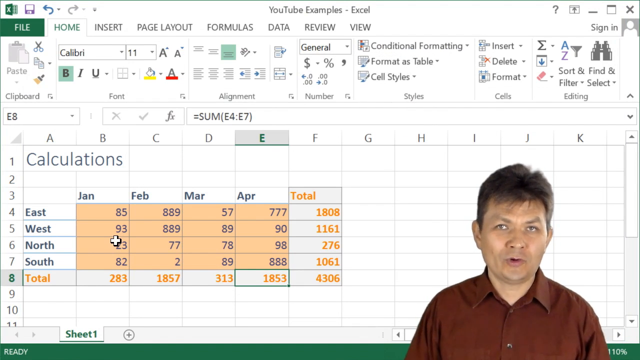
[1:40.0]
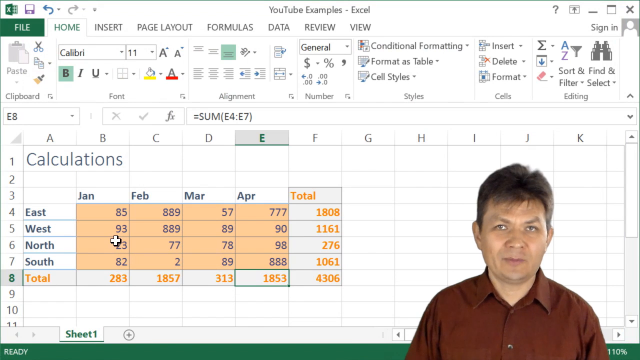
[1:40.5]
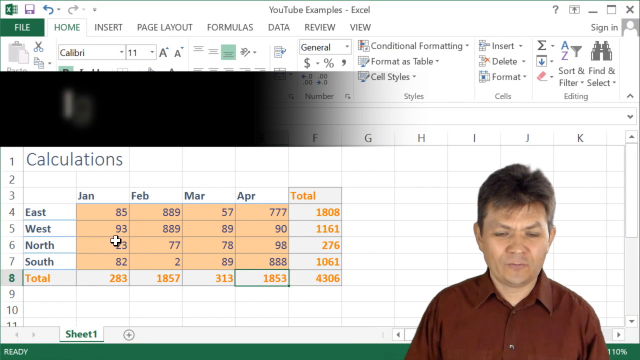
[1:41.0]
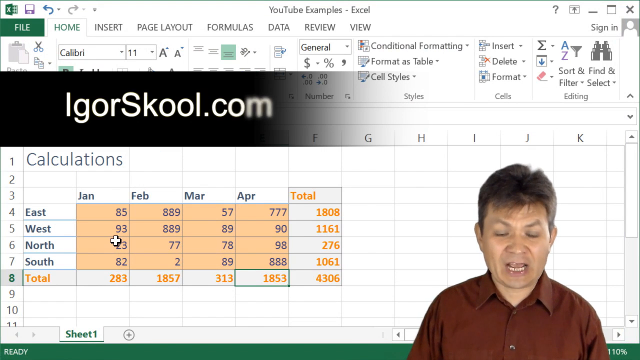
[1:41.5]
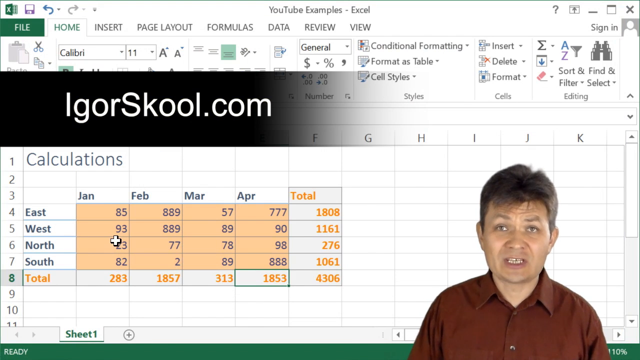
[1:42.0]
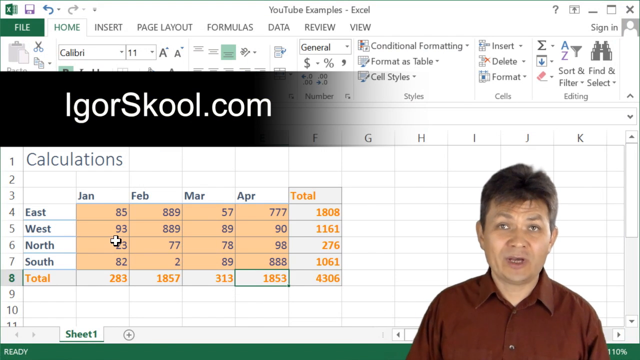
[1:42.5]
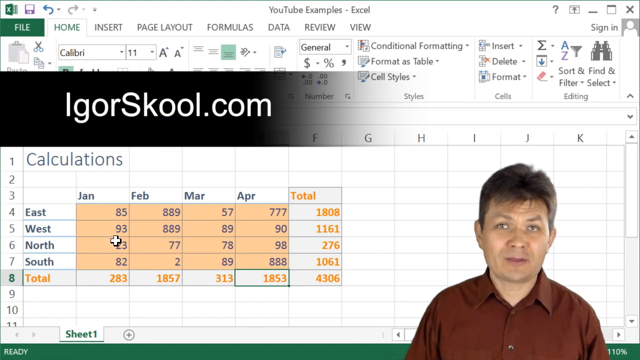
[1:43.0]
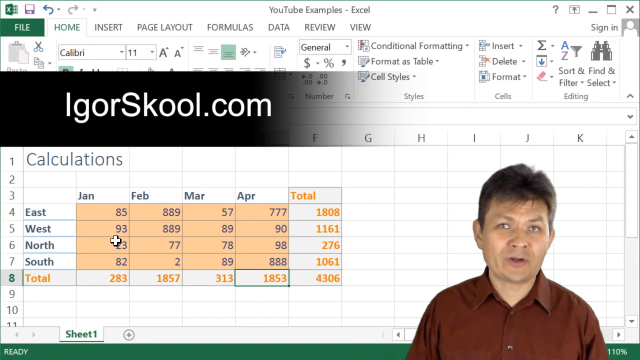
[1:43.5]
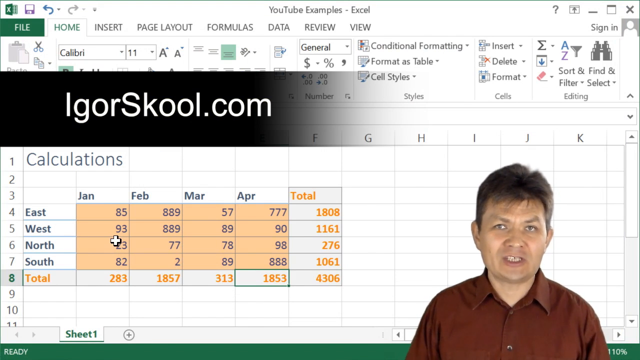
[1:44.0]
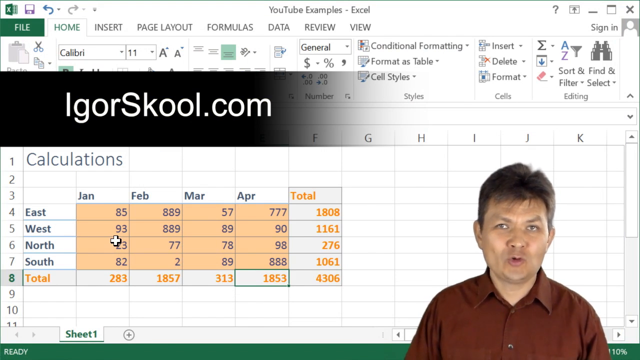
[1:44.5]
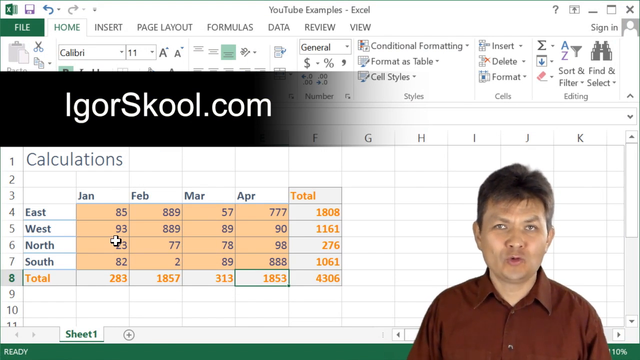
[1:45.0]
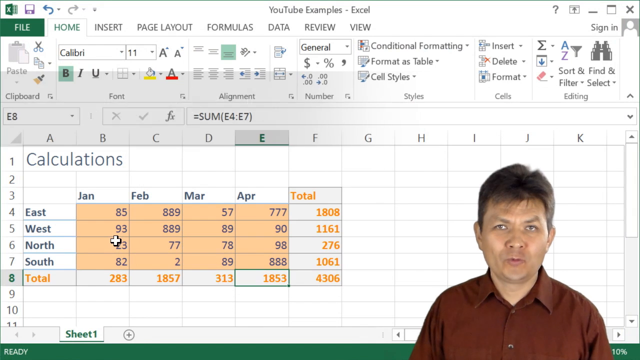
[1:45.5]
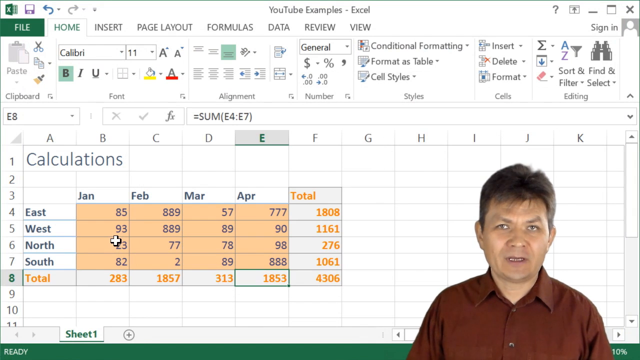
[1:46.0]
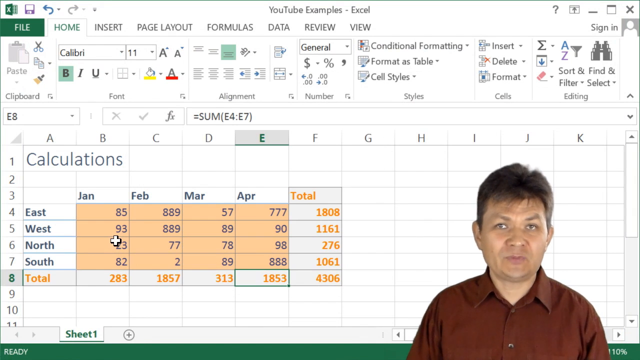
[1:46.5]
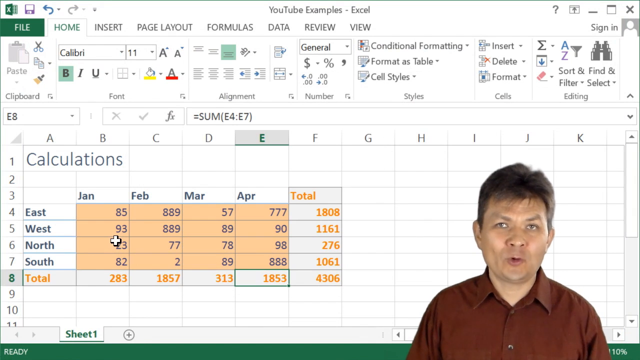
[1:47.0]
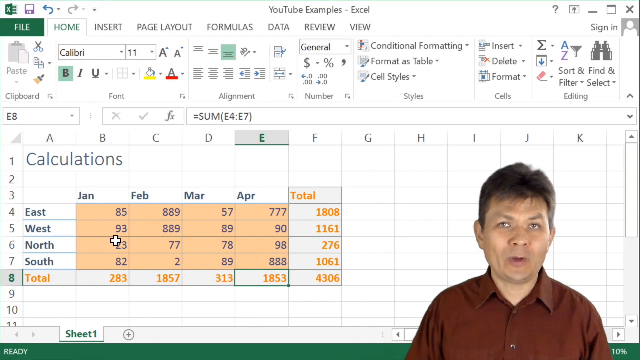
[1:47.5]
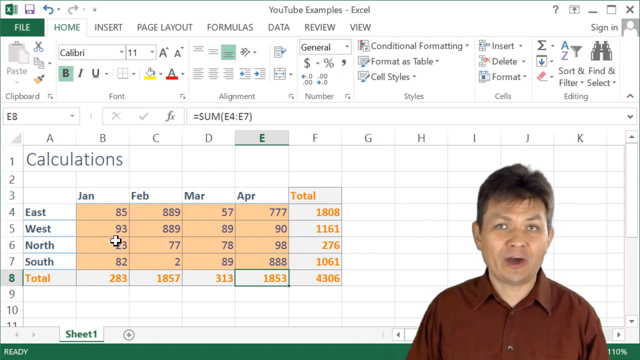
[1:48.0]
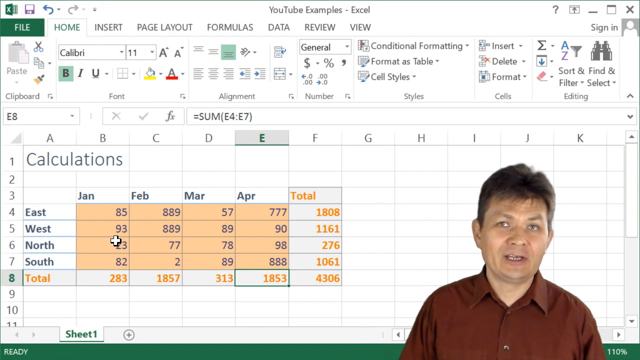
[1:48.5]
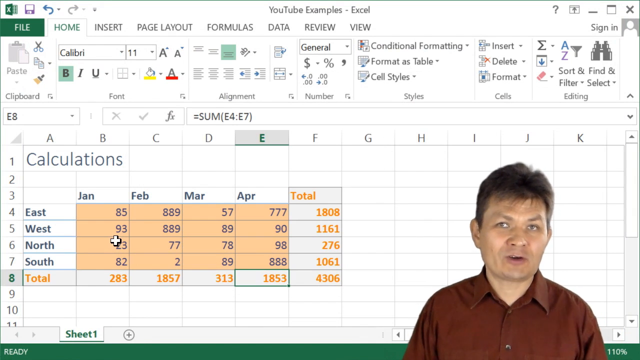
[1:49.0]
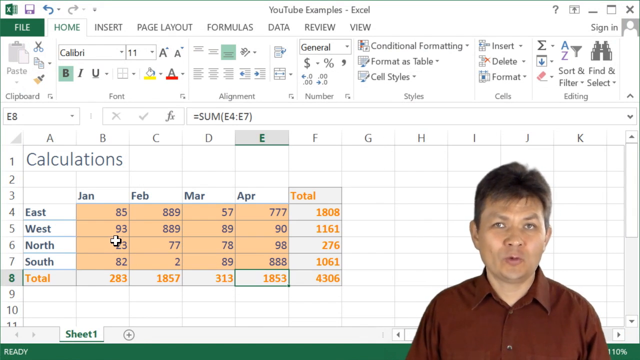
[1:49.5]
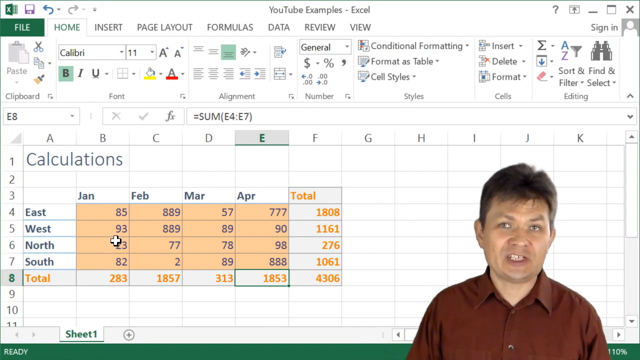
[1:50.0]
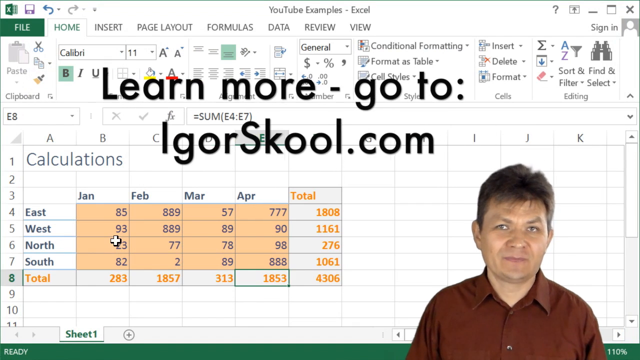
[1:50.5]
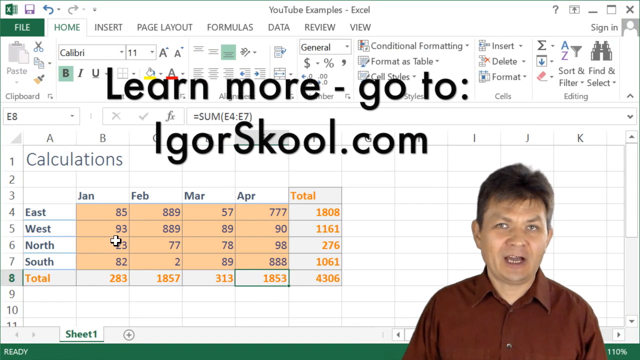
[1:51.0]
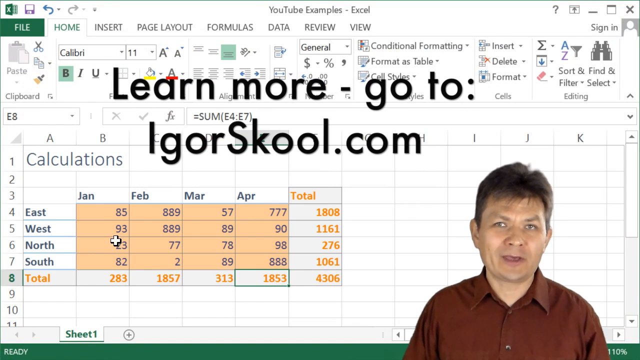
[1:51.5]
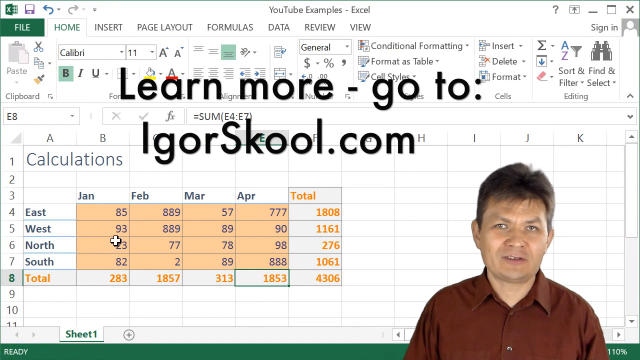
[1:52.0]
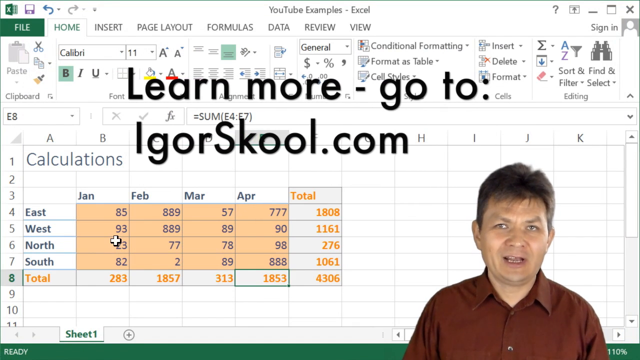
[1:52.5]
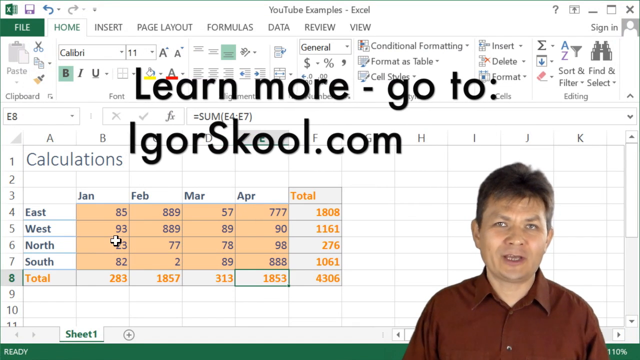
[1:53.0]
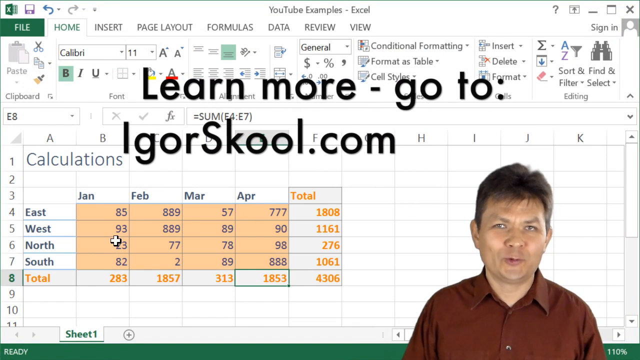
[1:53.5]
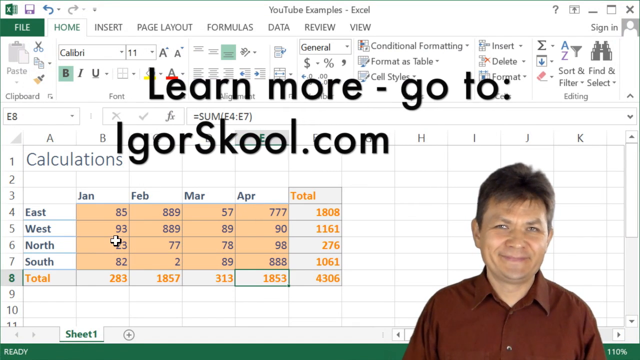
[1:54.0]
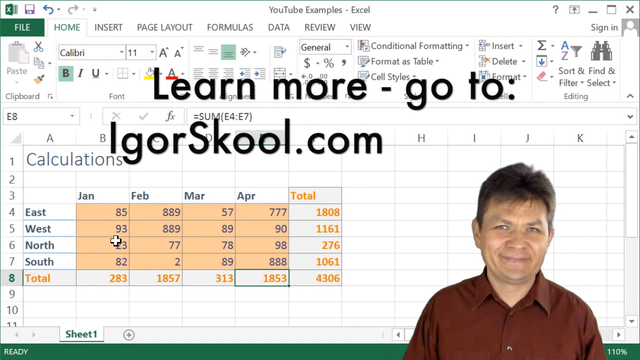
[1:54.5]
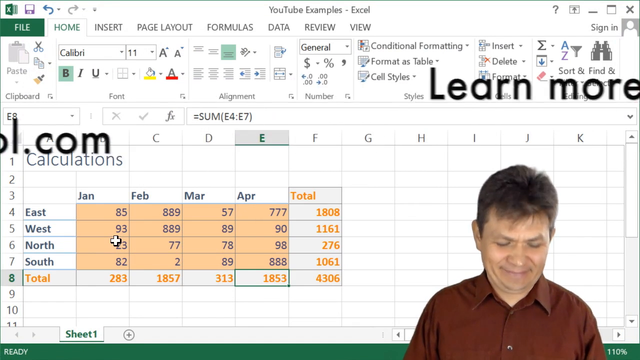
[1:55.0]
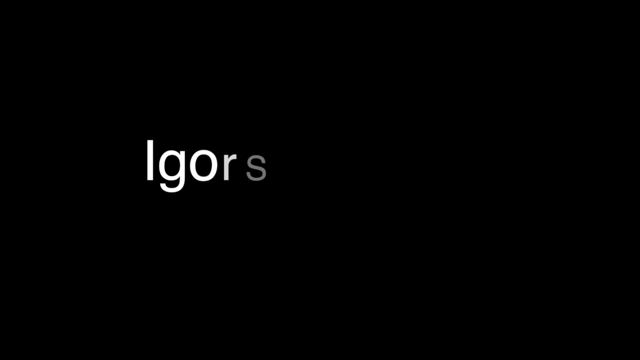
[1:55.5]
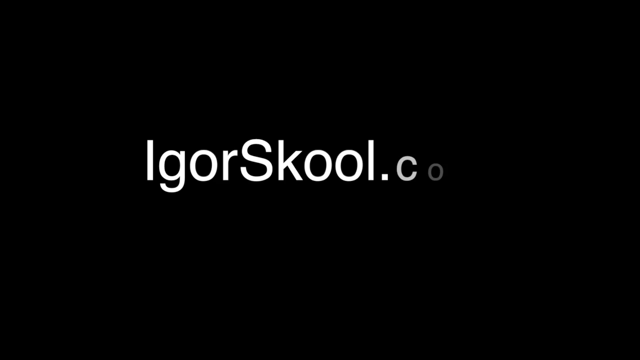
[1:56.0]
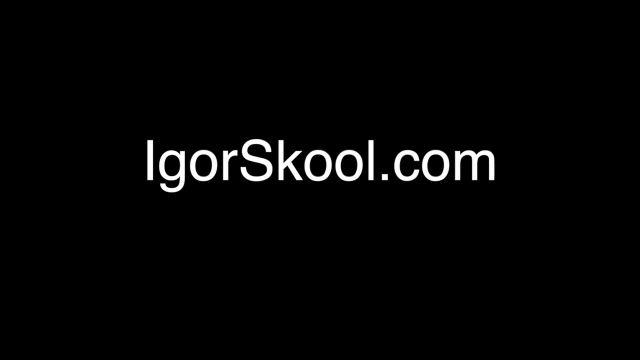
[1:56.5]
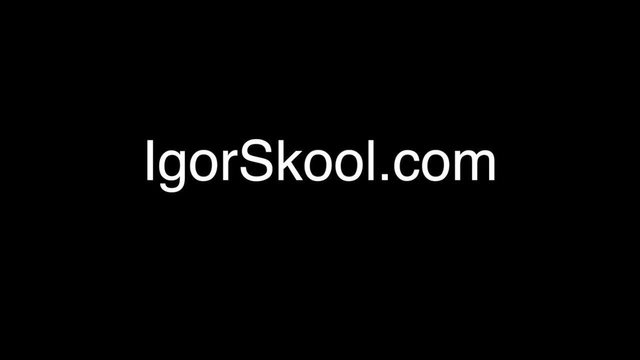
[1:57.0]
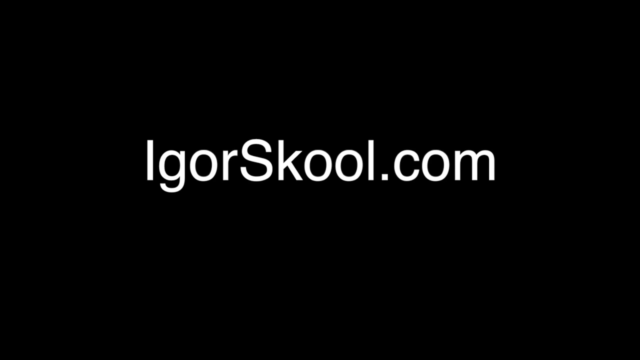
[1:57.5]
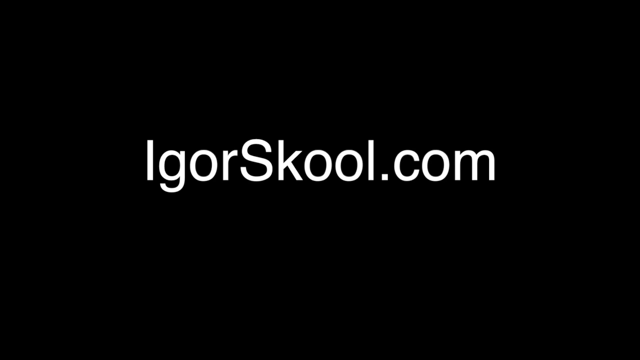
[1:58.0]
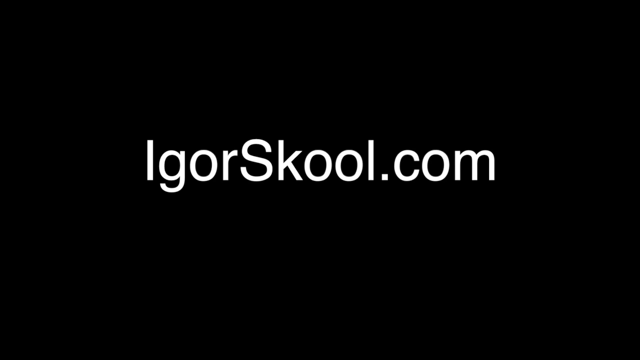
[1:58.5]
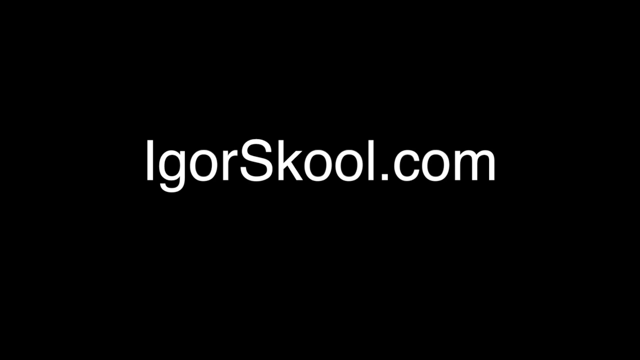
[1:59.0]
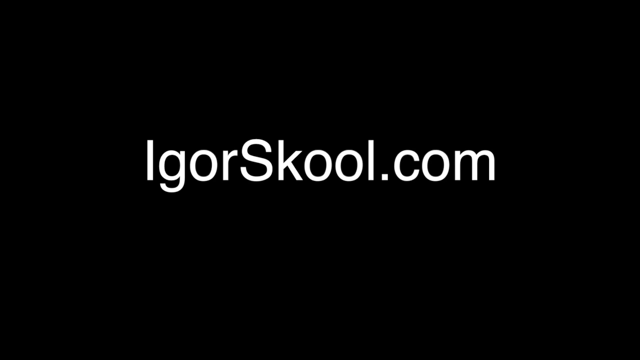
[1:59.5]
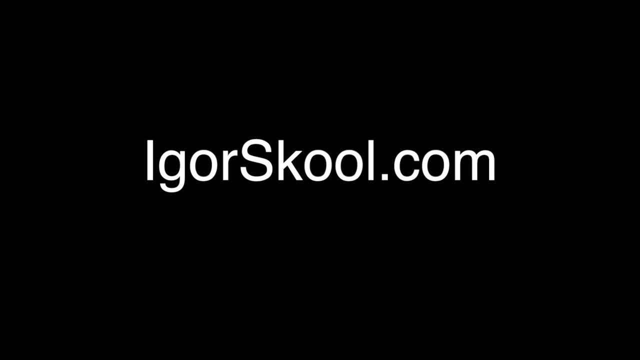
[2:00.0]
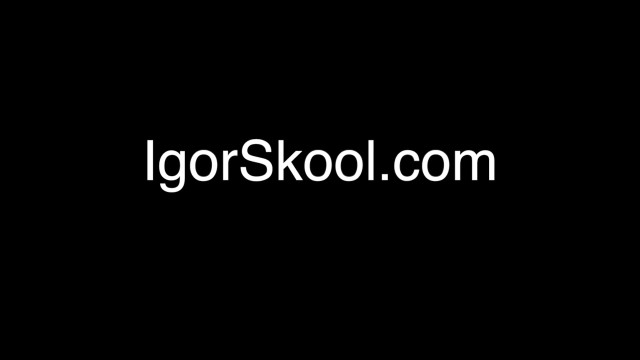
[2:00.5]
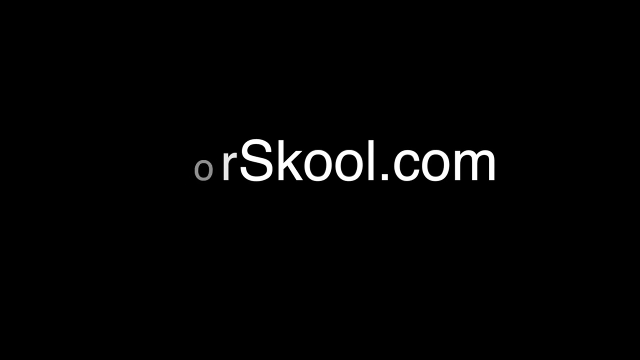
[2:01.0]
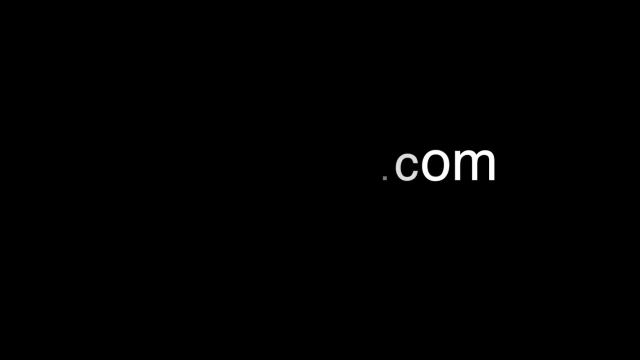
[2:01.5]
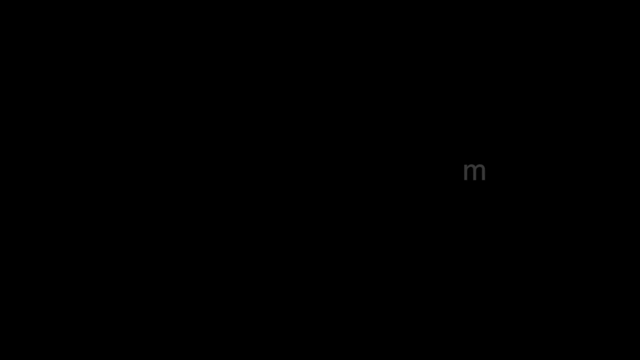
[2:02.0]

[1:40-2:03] Under Files, Options, General, Formulas, Manual is selected, and there is a recalculate workbook before saving option. Data in a column and row is highlighted and F9 is pressed to recalculate it.